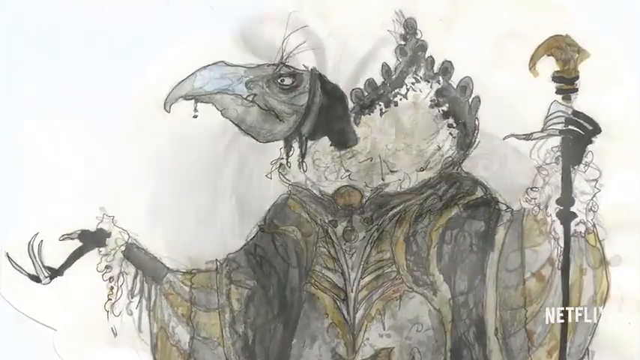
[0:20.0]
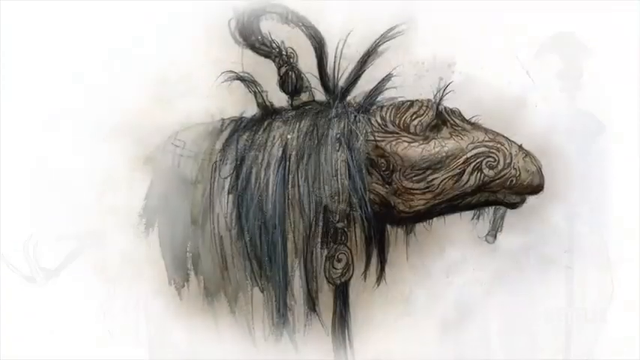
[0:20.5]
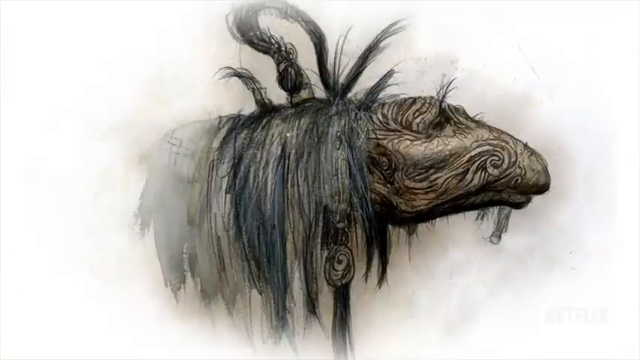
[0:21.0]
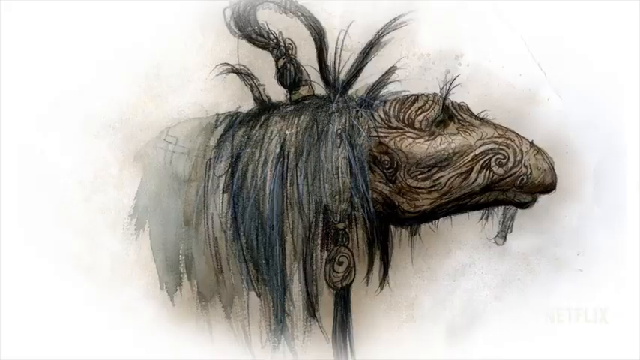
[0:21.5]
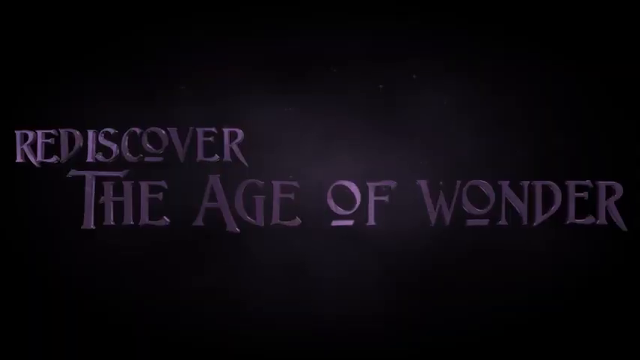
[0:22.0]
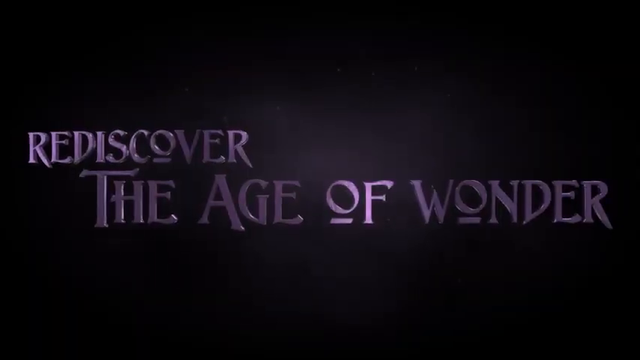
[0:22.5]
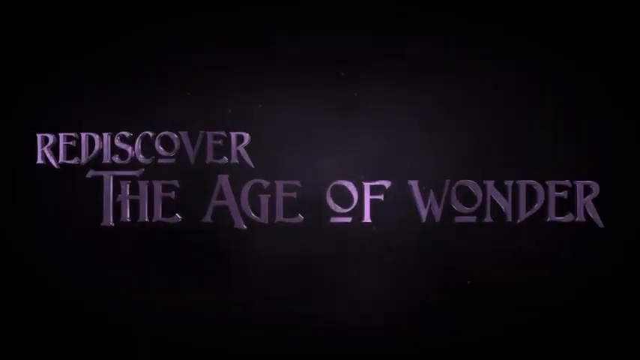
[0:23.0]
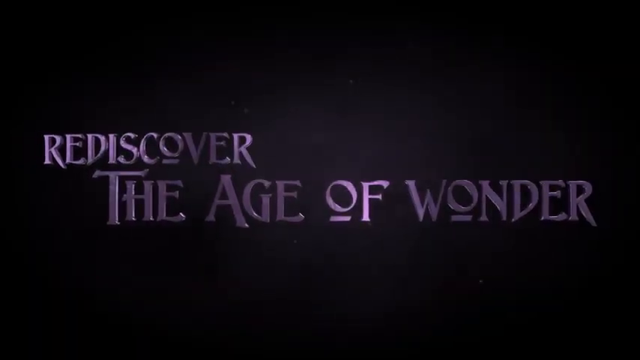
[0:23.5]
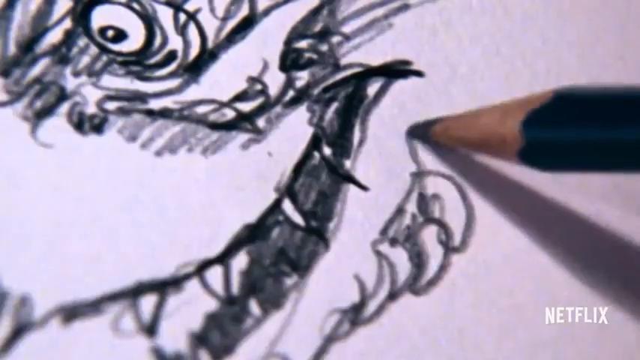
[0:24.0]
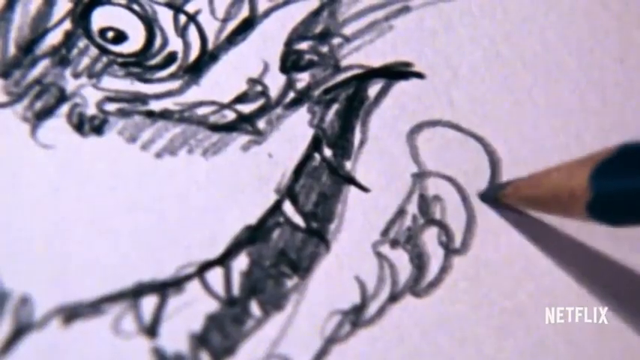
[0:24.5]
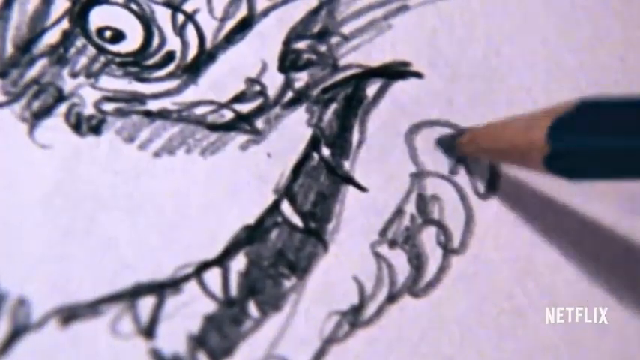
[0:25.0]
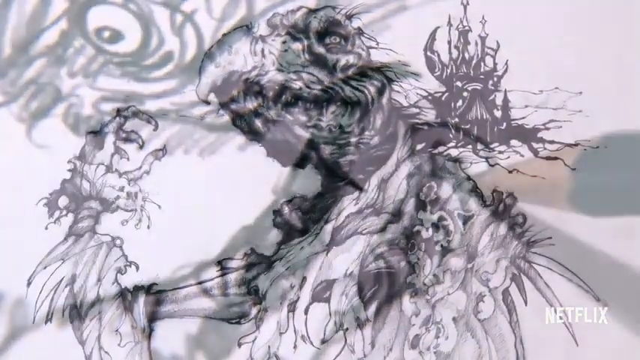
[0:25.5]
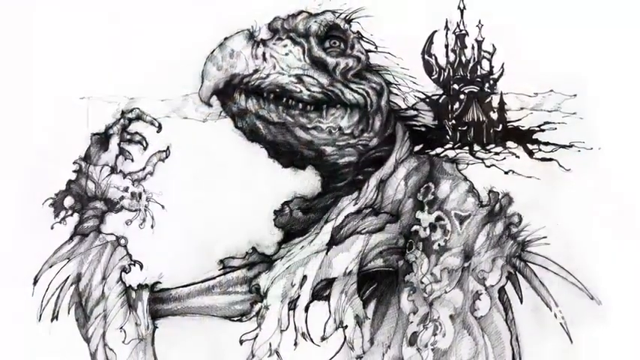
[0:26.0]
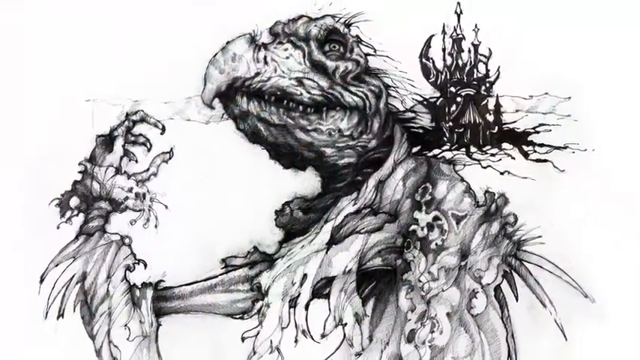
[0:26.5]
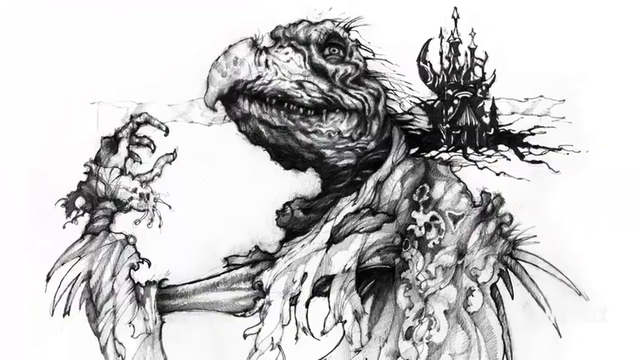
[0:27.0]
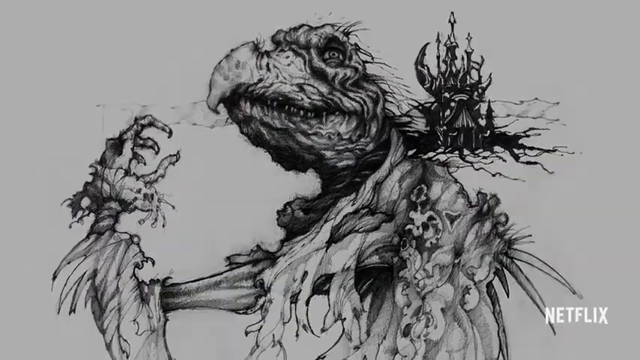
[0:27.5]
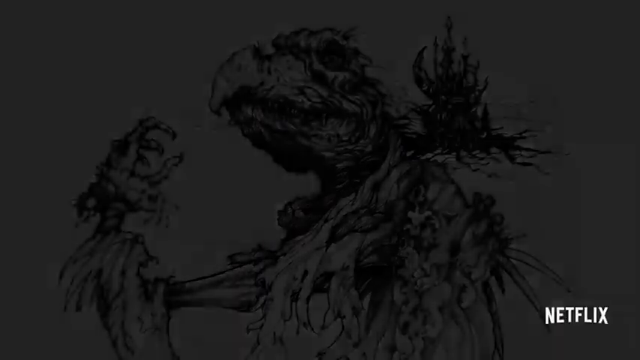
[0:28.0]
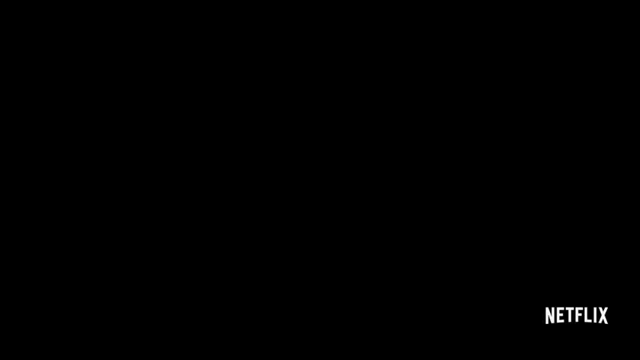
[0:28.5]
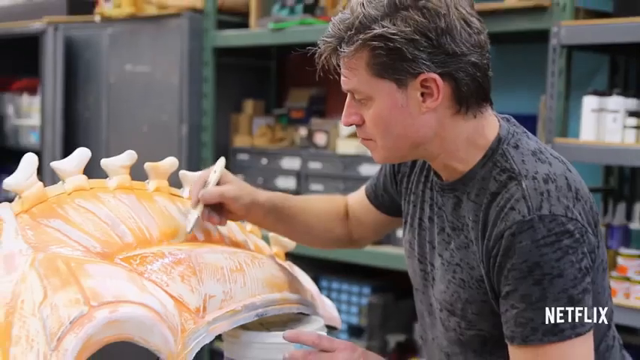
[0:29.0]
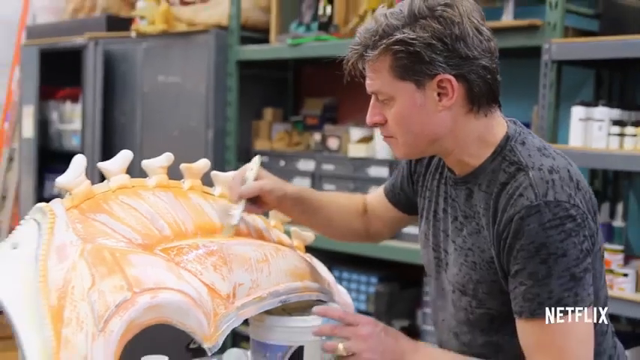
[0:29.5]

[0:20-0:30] The small Netflix logo is in the bottom right corner. A drawing shows a bird wearing a gown and holding something in its arm that kind of looks like a walking stick; it has very sharp nails. The head of some kind of creature with dark black hair appears. A black background with purple text reads "rediscover the age of wonder." Somebody draws with a black pencil on a piece of paper. A creature that looks kind of like a bird is shown with a castle standing behind it. The video kind of fades out, and a man is painting this object while another man is talking.